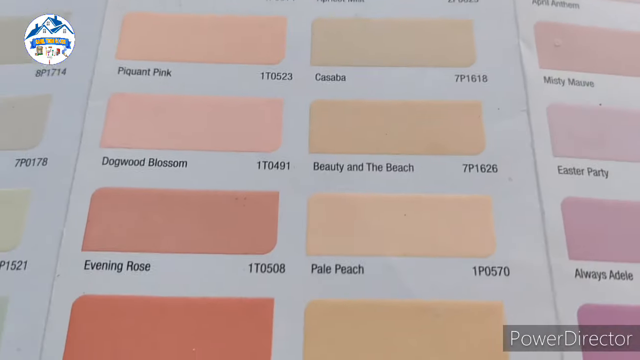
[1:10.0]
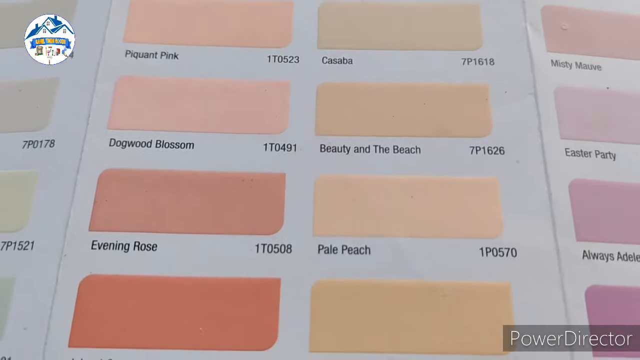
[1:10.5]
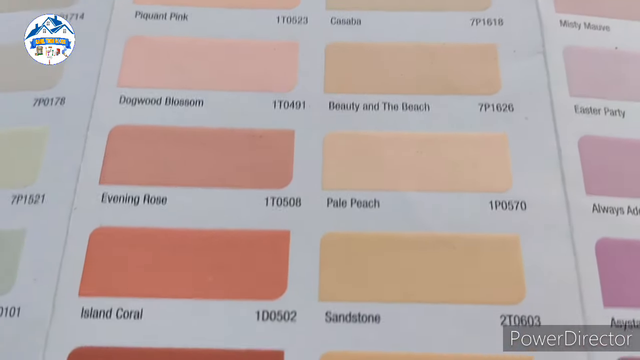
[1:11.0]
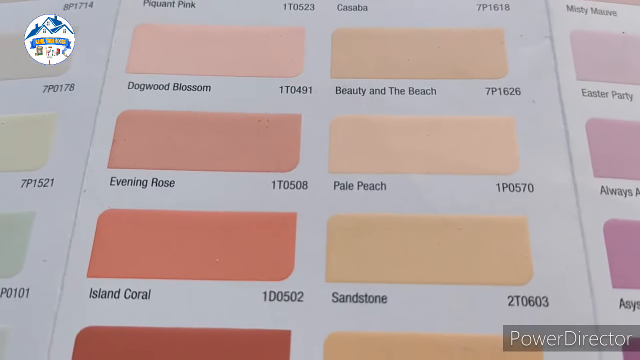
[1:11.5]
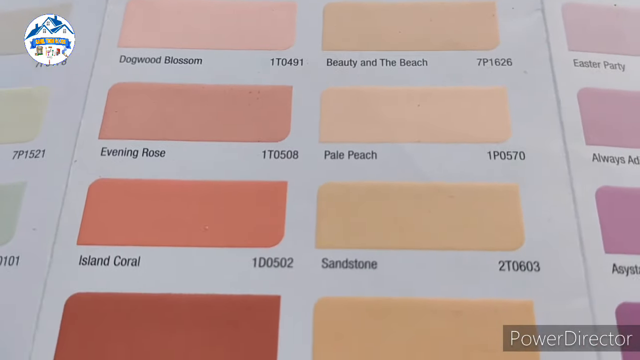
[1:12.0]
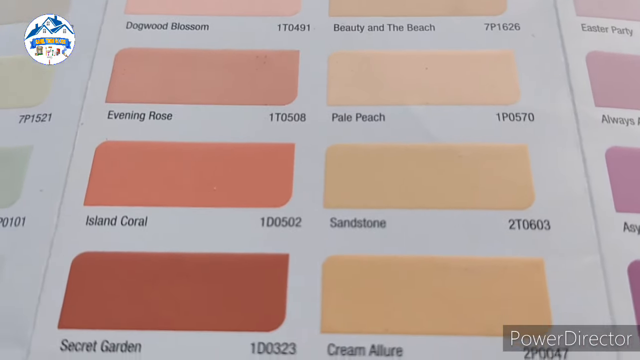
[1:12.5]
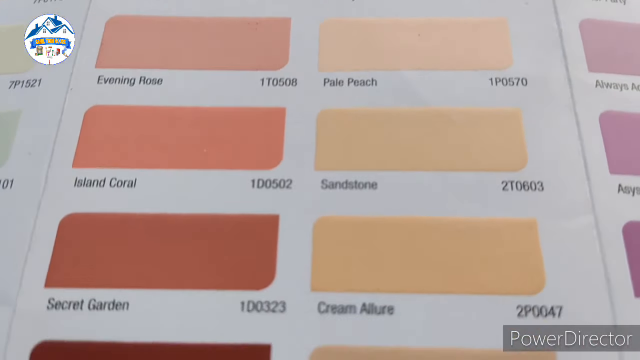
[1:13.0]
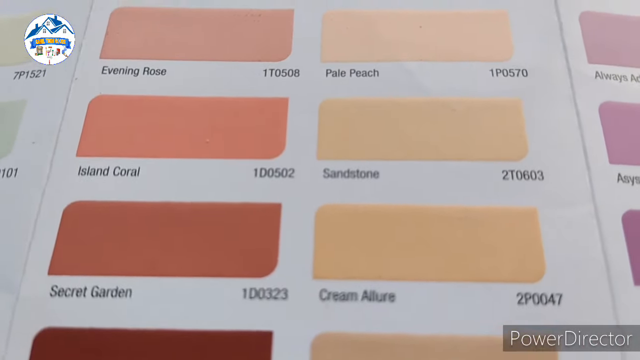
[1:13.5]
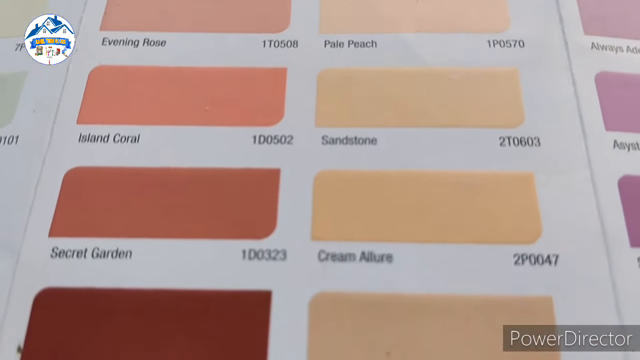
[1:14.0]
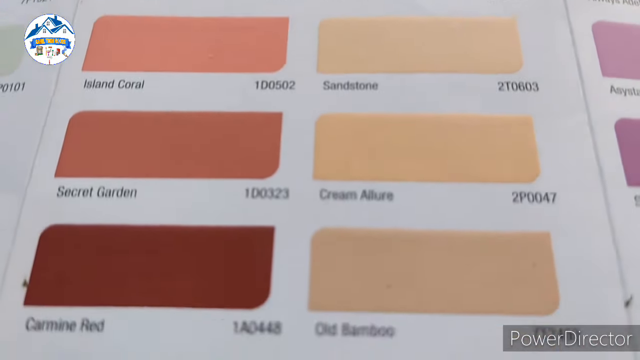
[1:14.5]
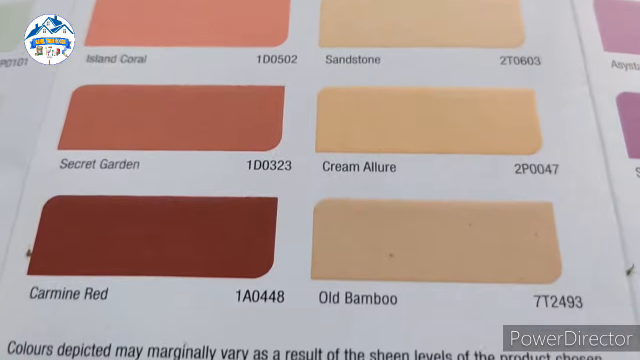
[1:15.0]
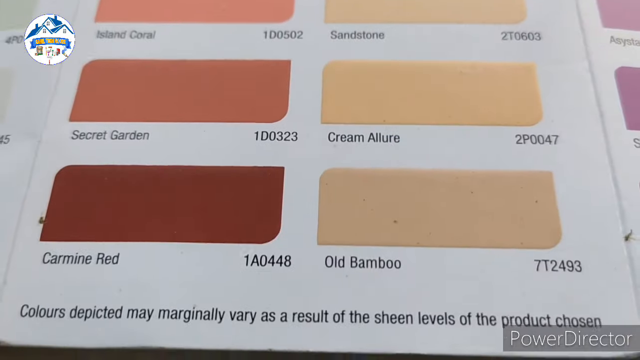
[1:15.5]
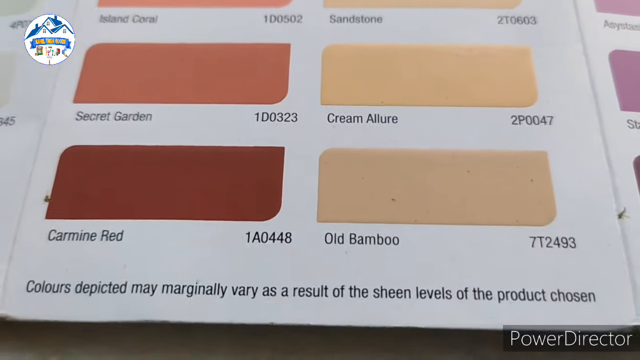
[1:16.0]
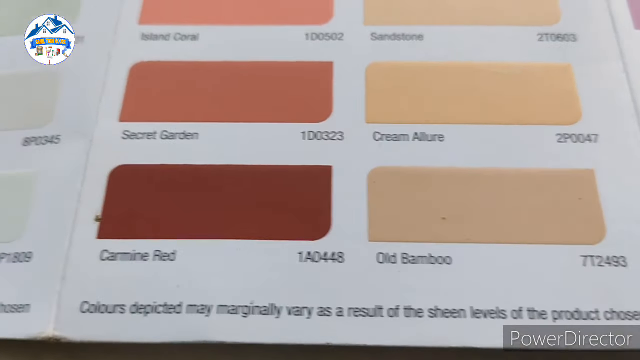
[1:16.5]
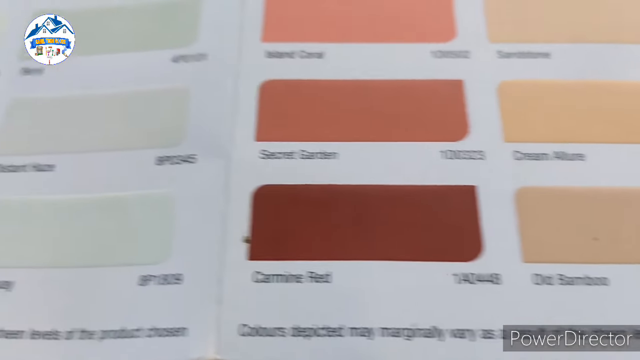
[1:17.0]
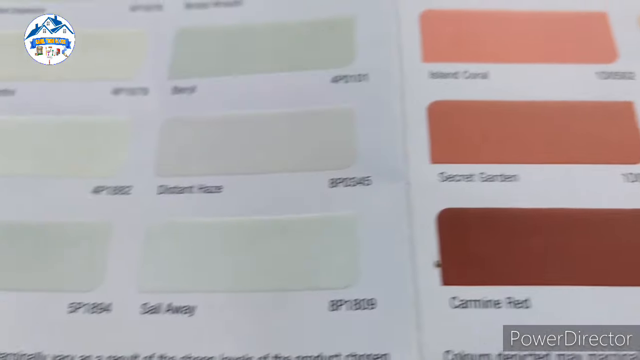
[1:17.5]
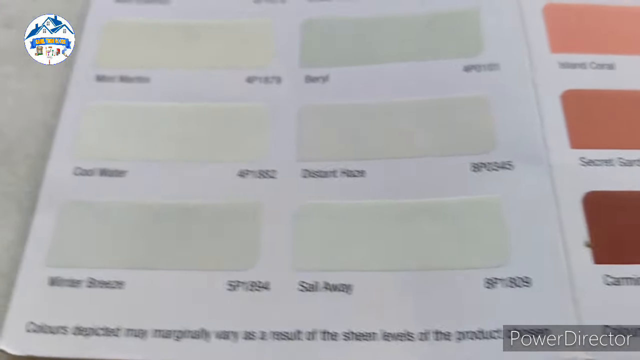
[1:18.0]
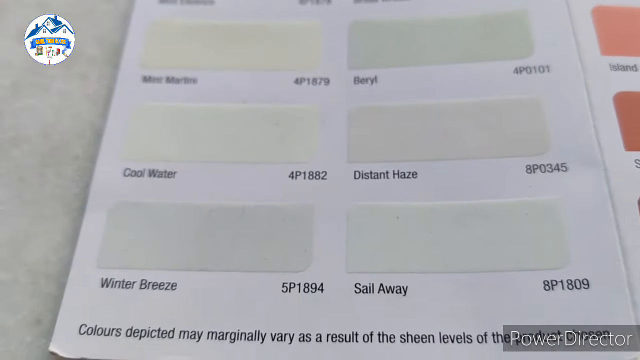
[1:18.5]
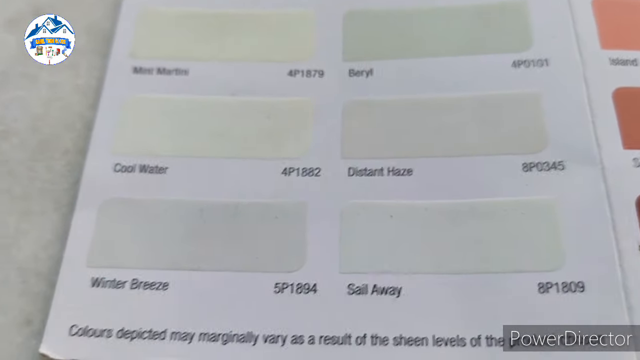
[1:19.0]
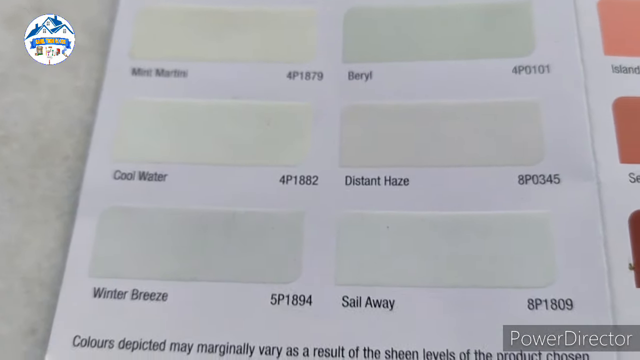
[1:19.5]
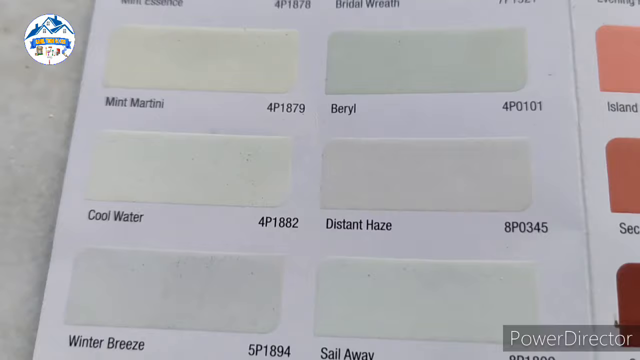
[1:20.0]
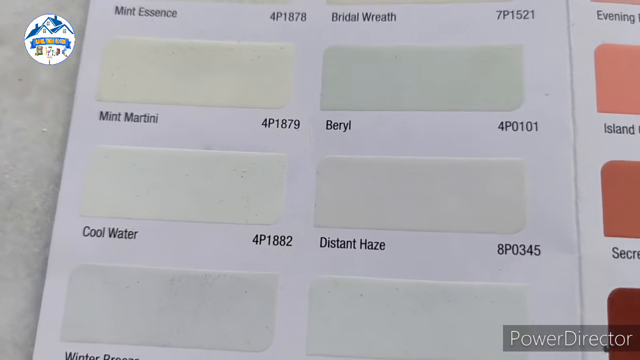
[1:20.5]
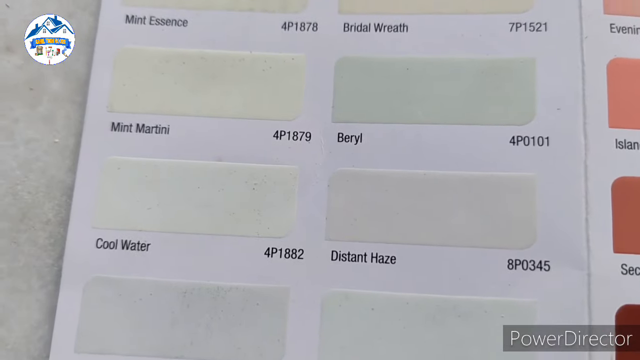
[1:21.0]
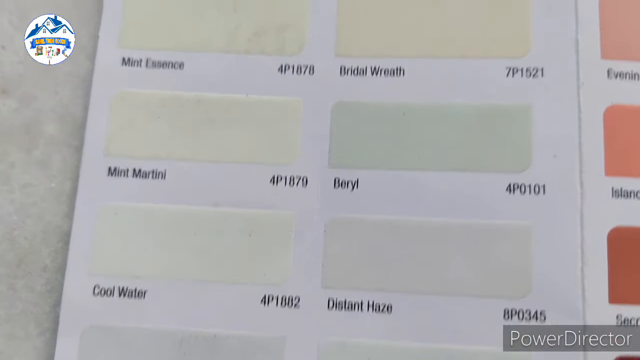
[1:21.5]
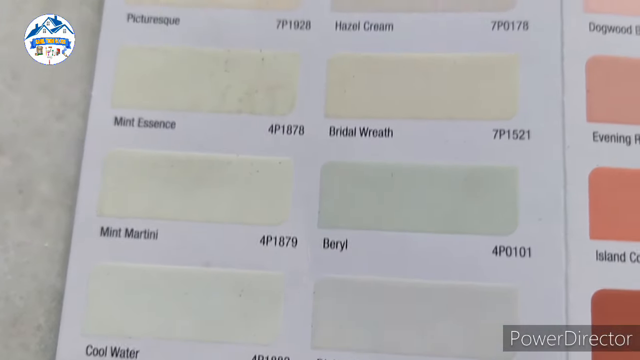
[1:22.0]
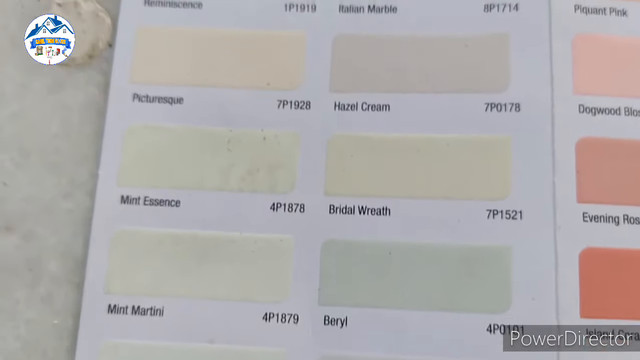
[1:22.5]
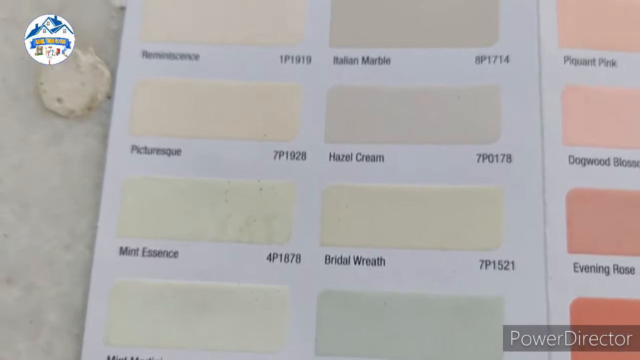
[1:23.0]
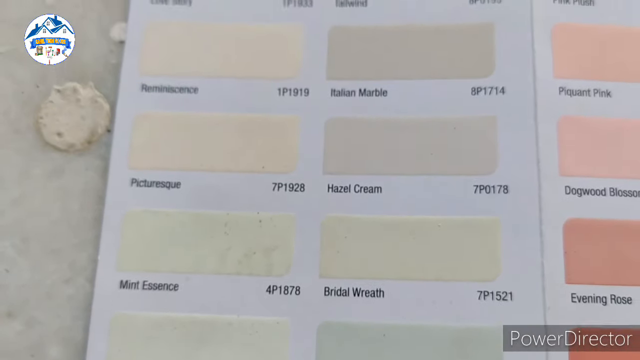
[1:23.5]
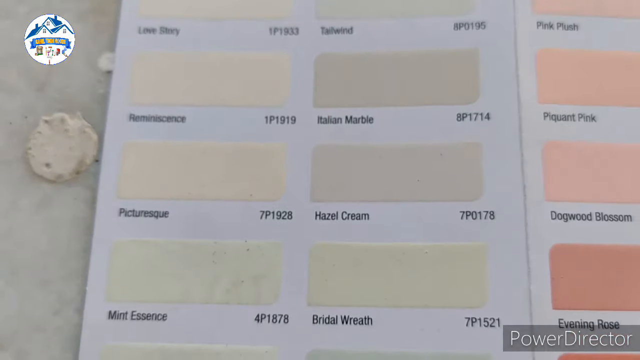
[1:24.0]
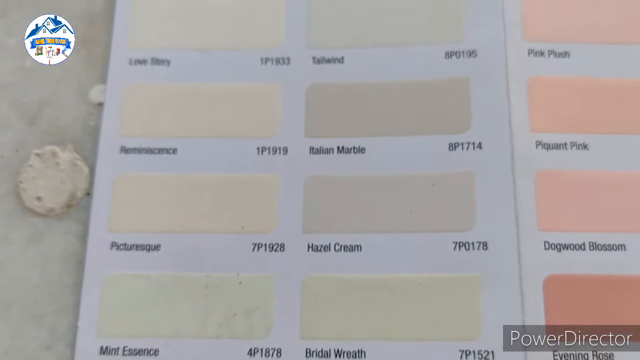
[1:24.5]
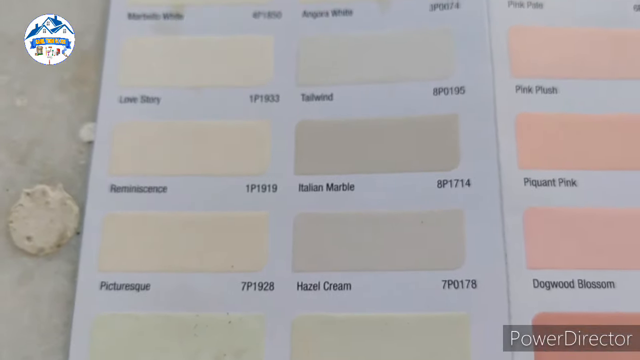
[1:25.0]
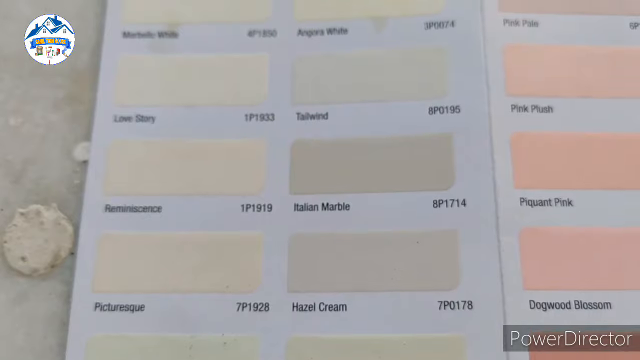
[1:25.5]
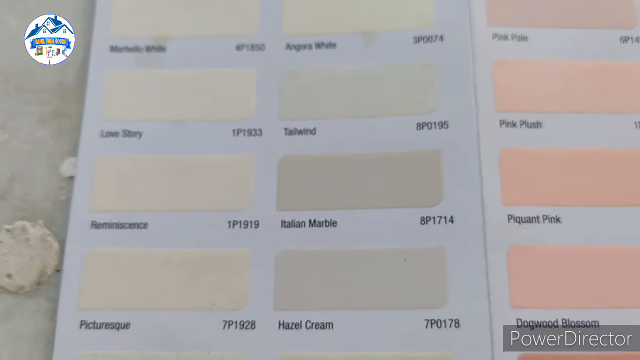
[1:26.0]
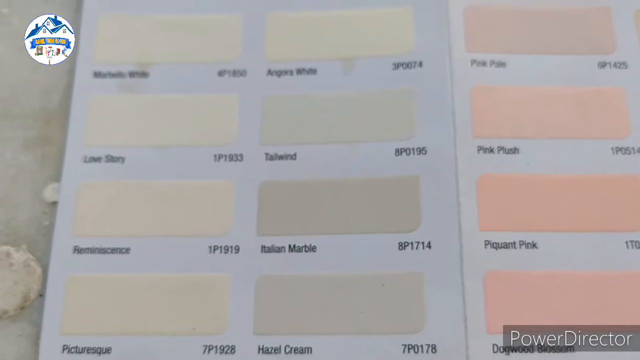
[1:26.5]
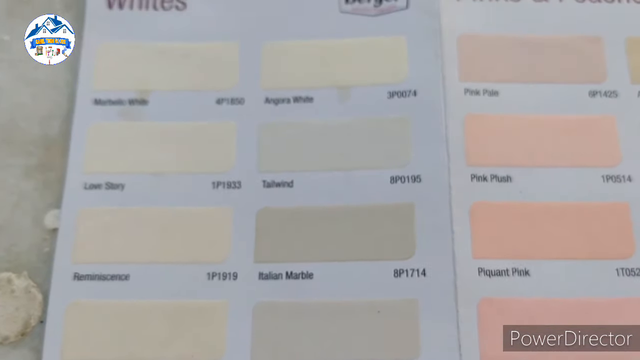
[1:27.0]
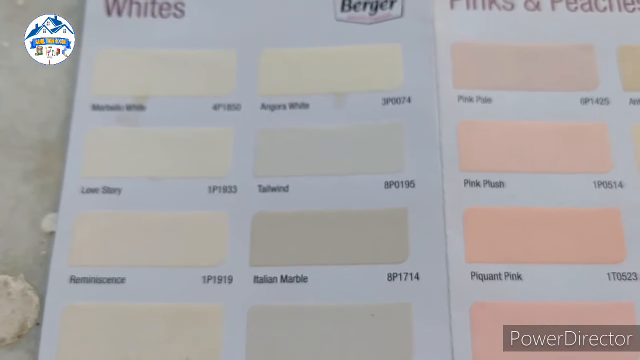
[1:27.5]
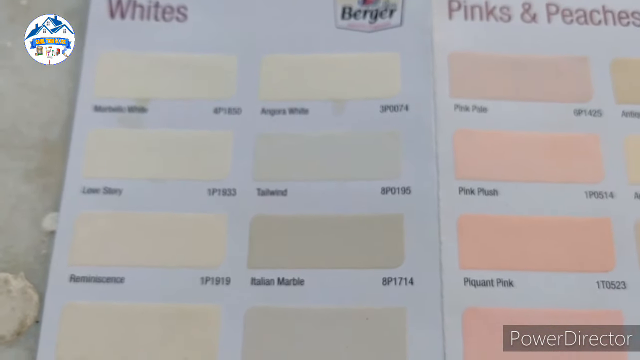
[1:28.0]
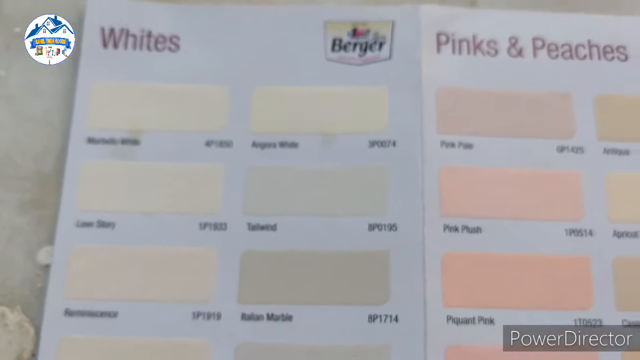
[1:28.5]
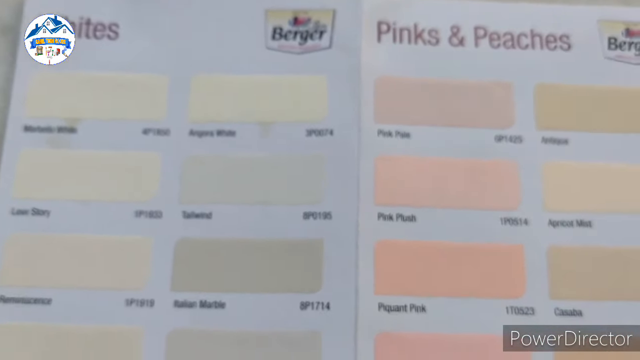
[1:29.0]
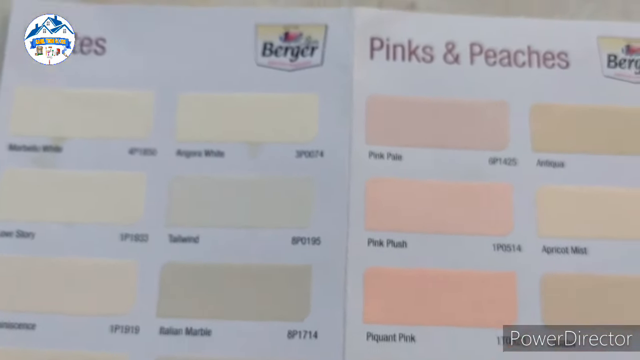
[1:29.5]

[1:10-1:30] The paint samples are lighter at the top and get darker near the bottom, with darker reds and oranges; names include Cream Allure, Secret Garden and Carmen Red, a very dark shade of red. The view then changes to lighter, white and kind of beige colors, with names such as Cool Water and Beryl, seemingly entirely beige or white. A few samples have slight stains underneath the name, suggesting this could be an older book that has been out for a while in a showroom or paint store. Off to the side are some small marks on the counter that appear to be white, possibly from samples or another substance. The book looks a little older and has a variety of paint colors.